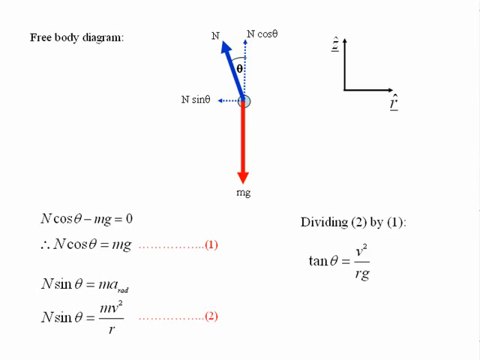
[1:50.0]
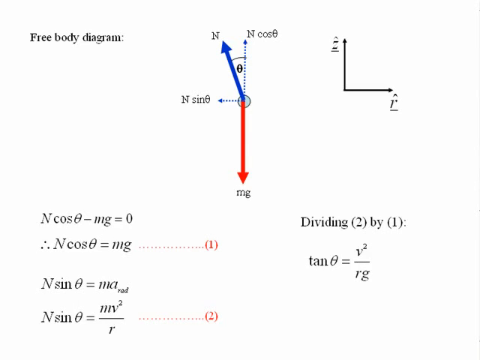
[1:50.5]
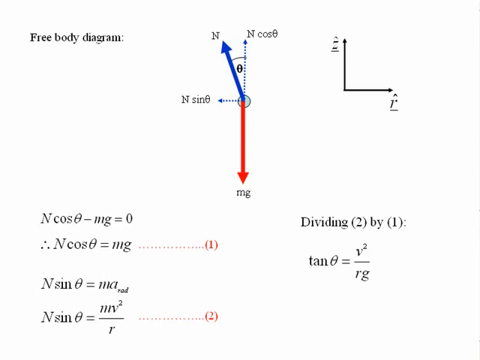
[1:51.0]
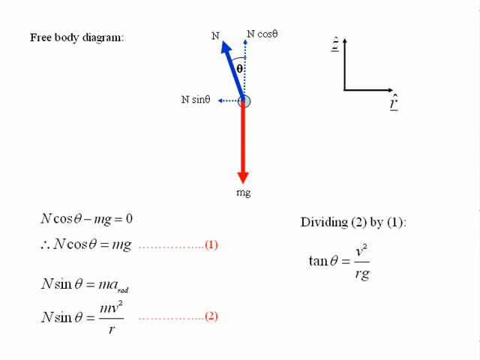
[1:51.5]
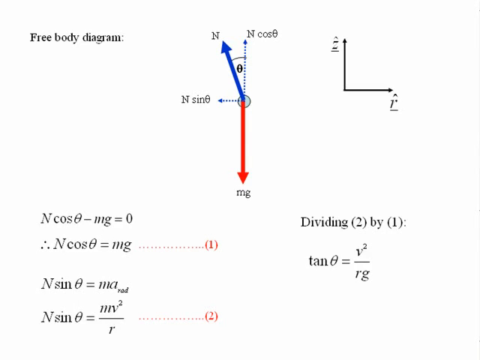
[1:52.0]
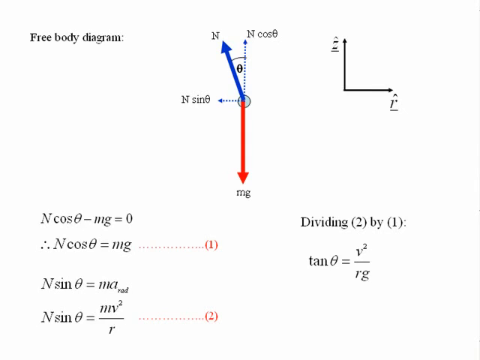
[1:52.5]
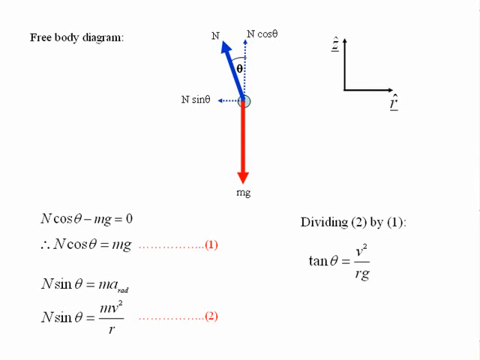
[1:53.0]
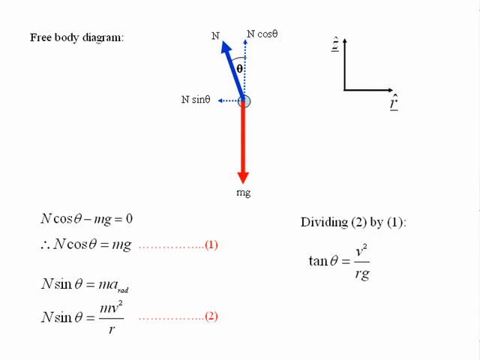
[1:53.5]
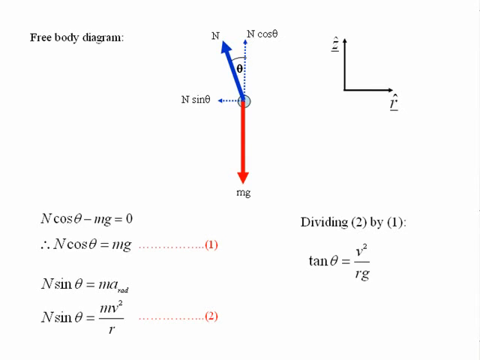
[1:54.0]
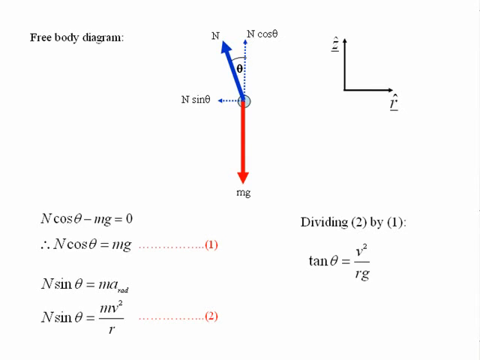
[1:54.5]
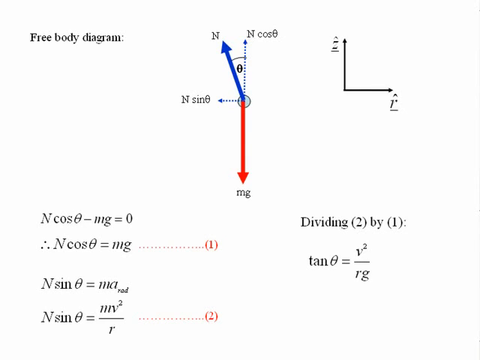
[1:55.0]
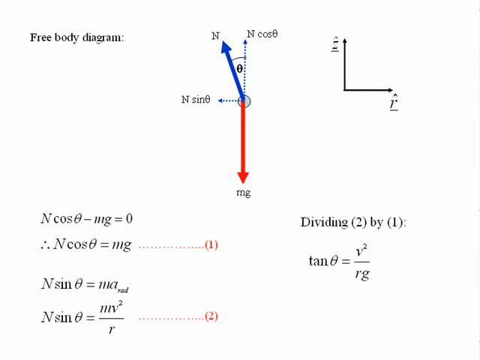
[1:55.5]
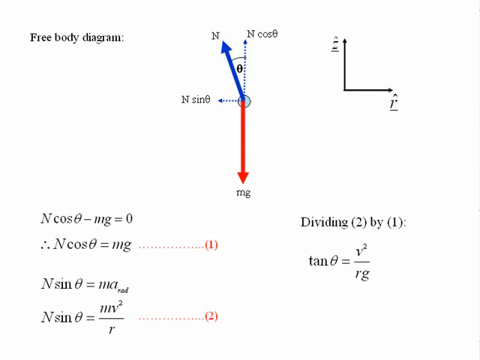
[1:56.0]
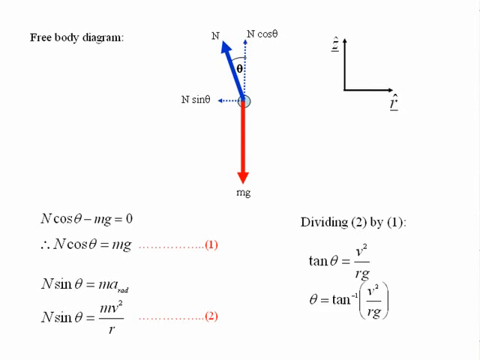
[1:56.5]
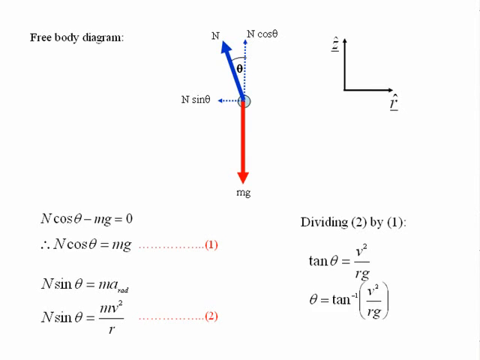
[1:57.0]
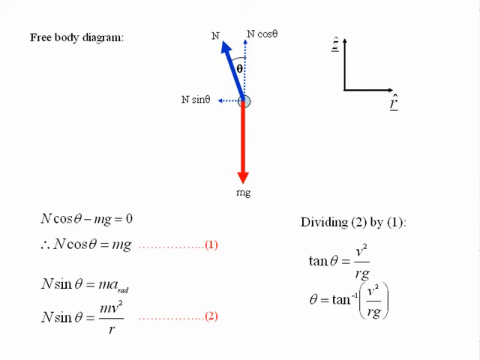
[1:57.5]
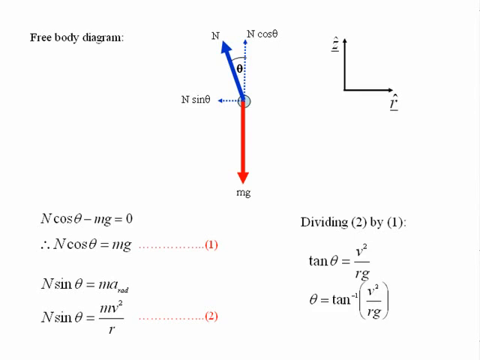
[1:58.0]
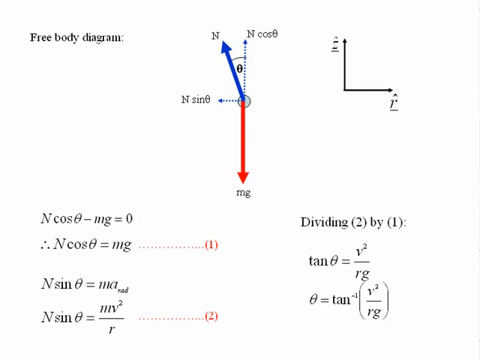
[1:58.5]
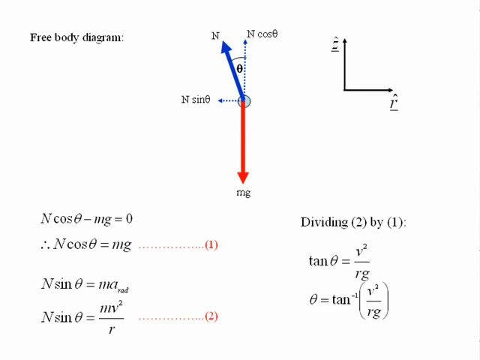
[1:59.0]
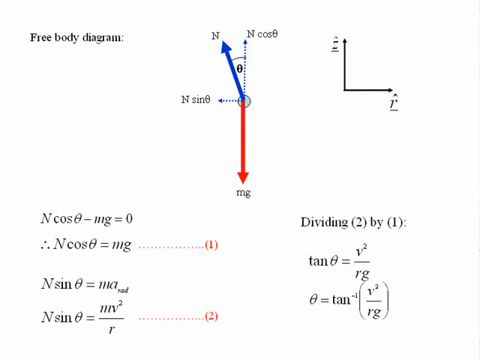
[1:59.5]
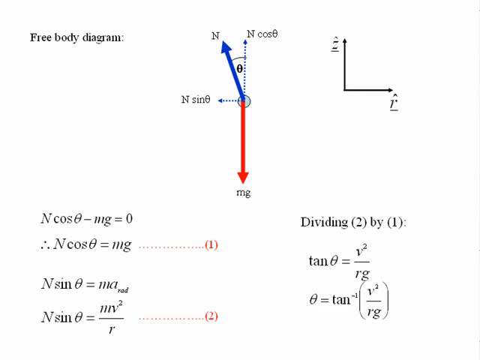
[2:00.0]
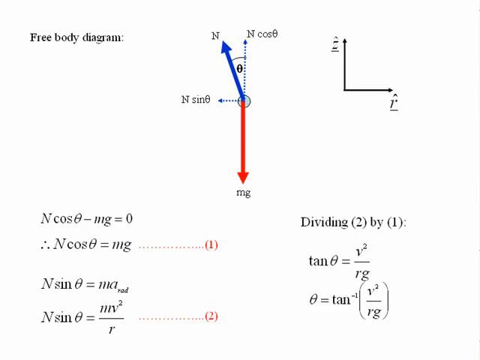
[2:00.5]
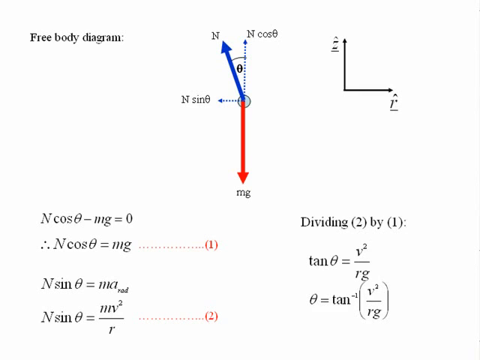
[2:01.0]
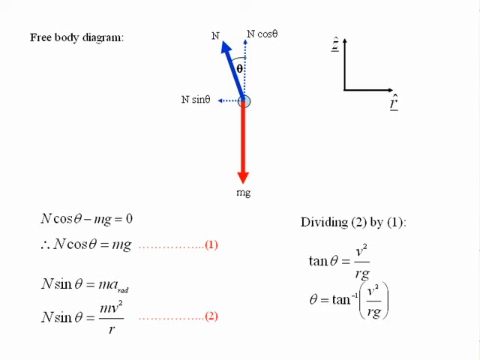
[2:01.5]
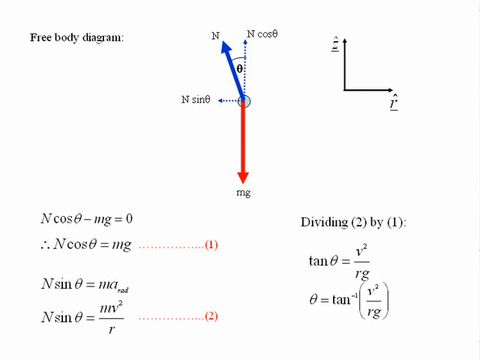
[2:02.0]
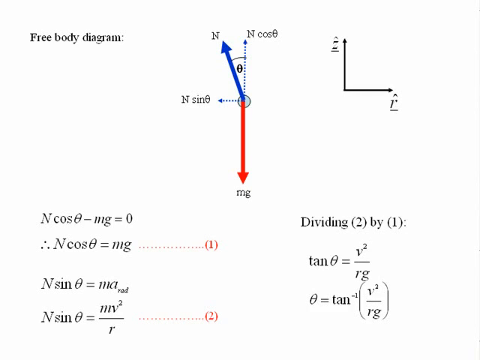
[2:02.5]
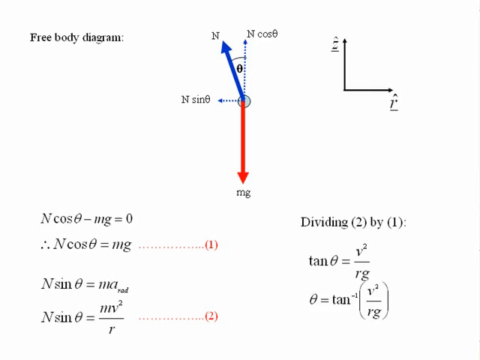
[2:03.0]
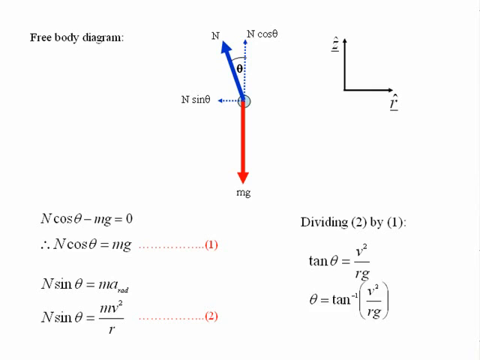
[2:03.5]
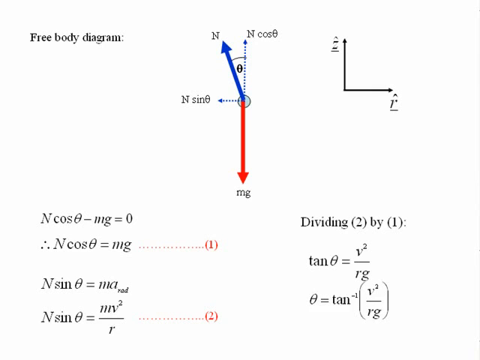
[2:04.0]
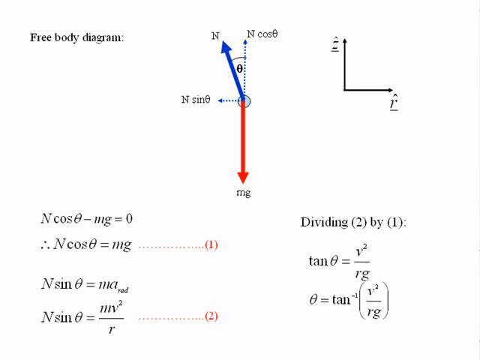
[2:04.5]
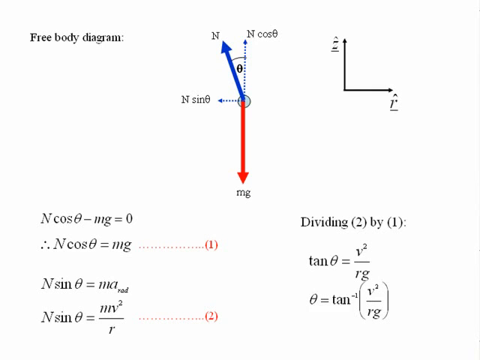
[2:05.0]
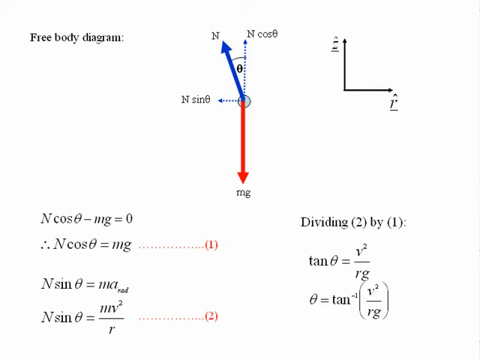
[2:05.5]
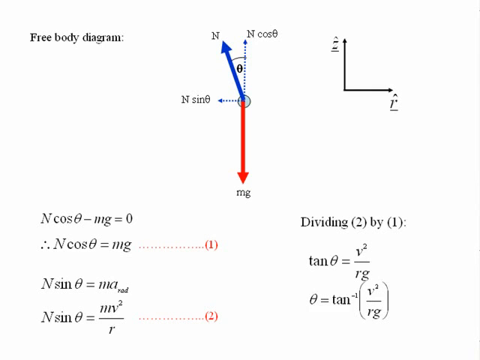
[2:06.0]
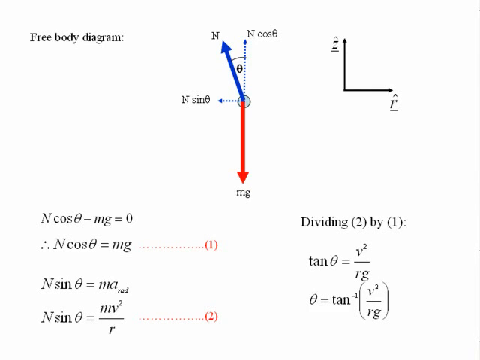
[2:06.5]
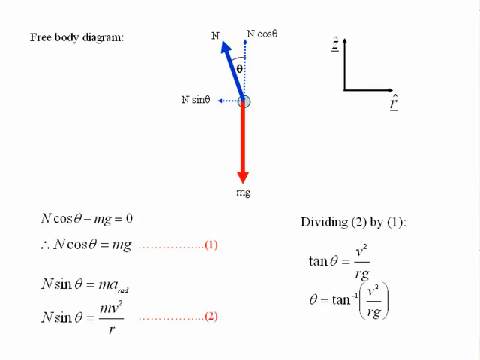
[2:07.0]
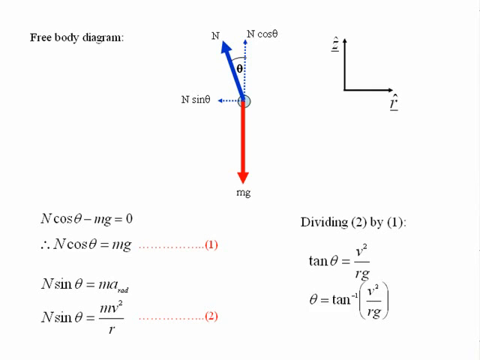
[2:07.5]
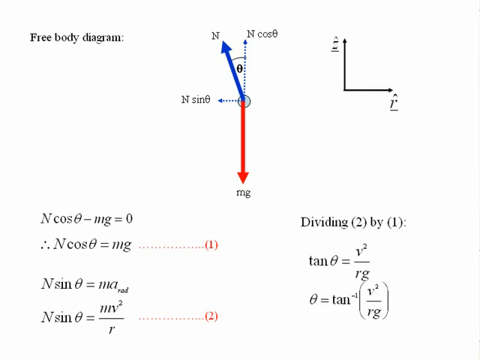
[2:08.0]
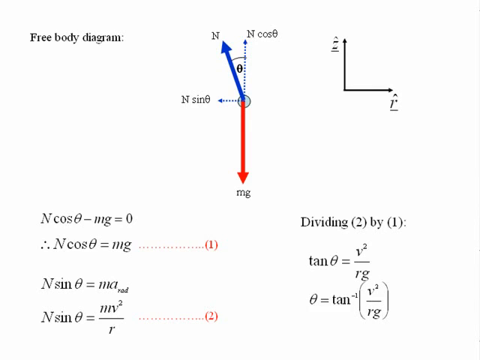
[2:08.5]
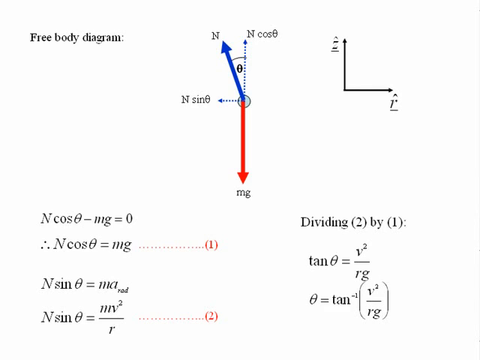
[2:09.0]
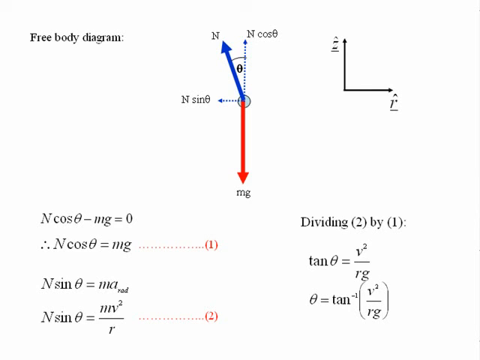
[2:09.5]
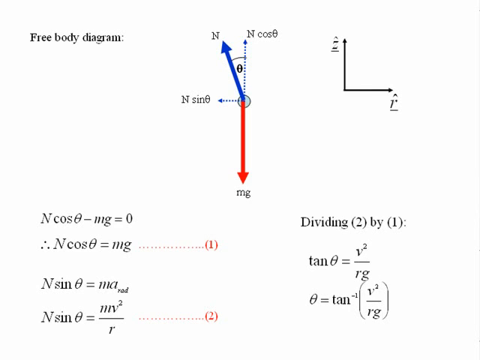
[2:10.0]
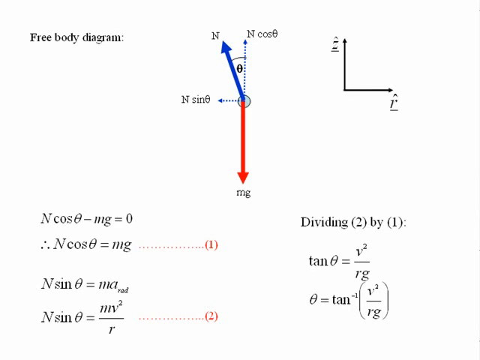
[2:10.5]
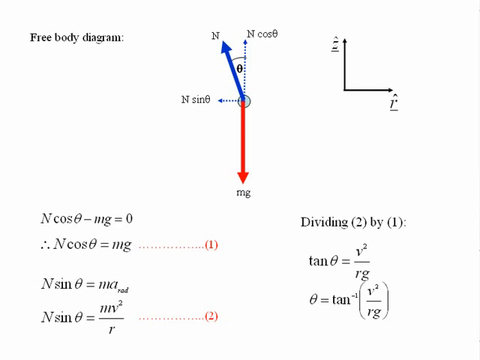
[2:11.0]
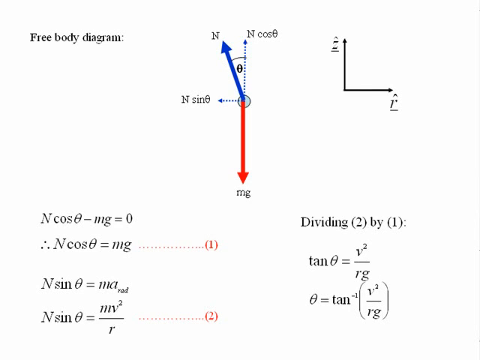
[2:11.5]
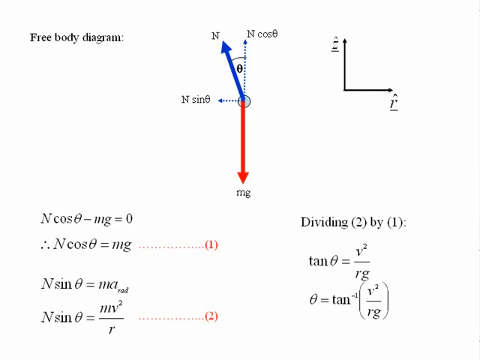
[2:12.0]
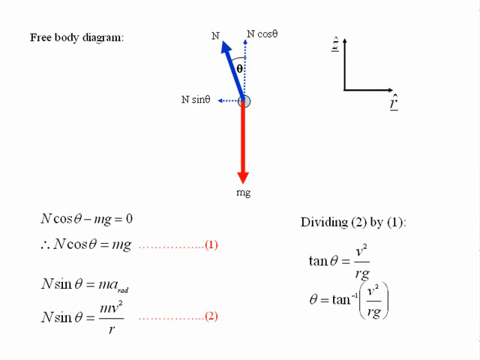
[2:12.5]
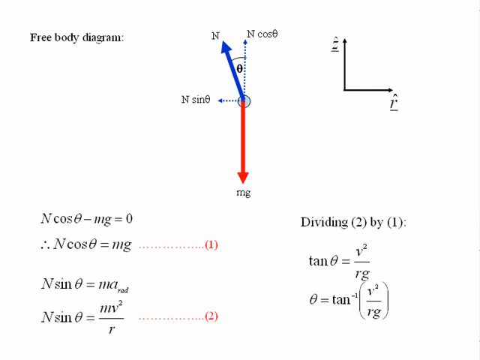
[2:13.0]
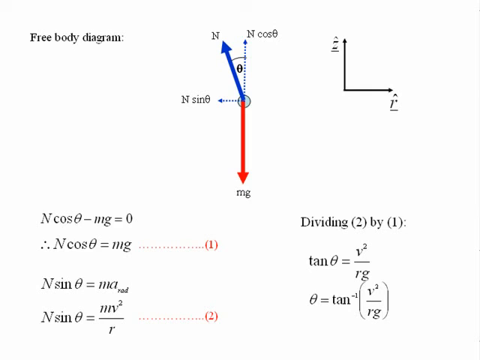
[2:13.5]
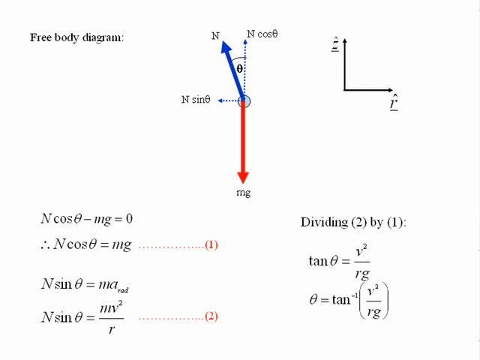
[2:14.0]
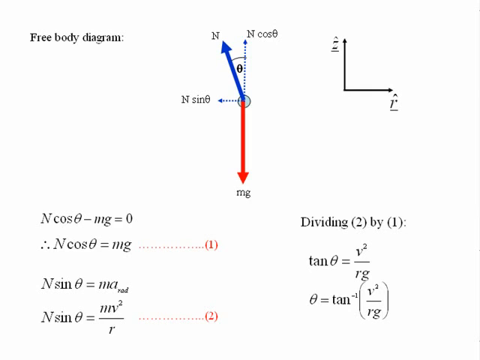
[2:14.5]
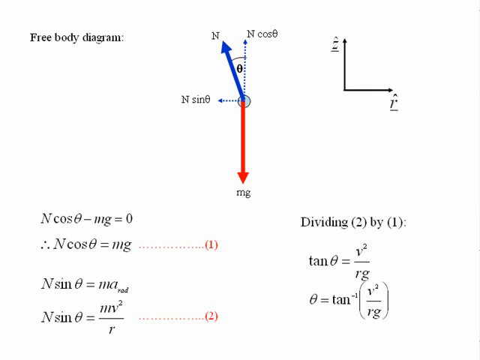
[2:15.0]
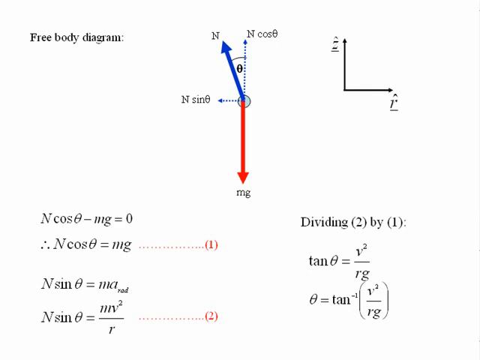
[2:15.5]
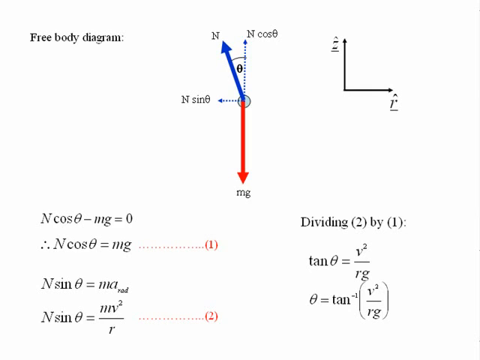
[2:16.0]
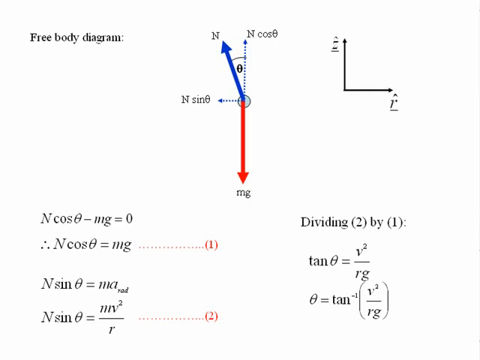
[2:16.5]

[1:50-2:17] The free body diagram remains, with trigonometric functions, sine, cosine and tangent, used in equations involving variables such as mg, mv squared, r, rg and v. The screen then shows that theta, the angle, equals the inverse tangent of v cubed over rg. The sort of blank white screen with all of this information stays as one static page showing the angles, with no humans or animals.